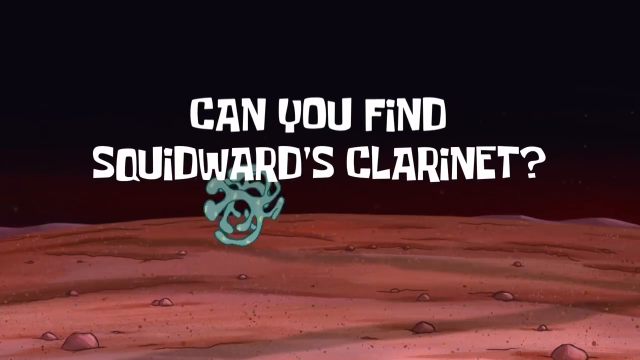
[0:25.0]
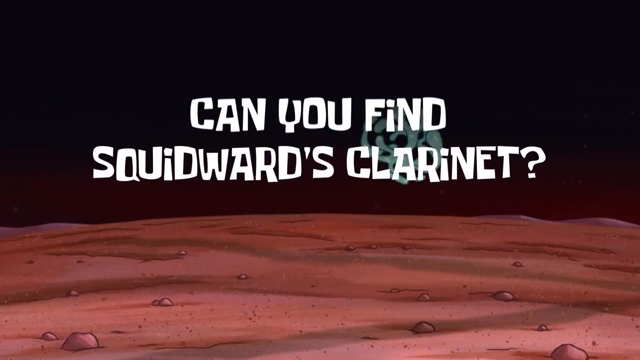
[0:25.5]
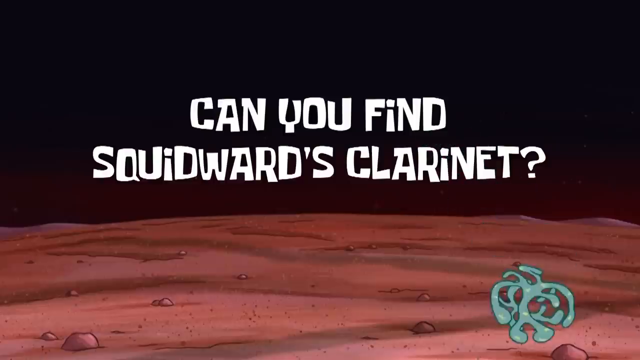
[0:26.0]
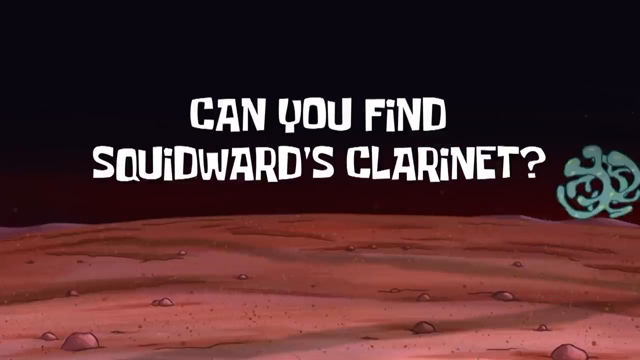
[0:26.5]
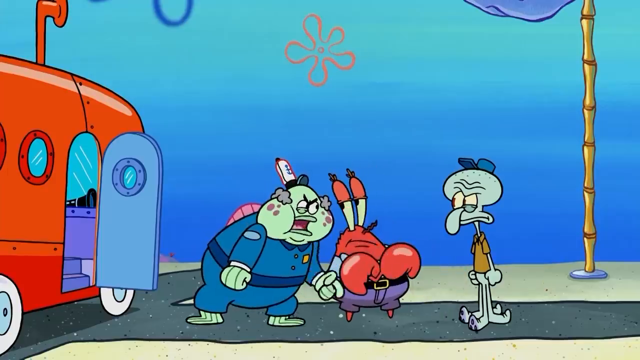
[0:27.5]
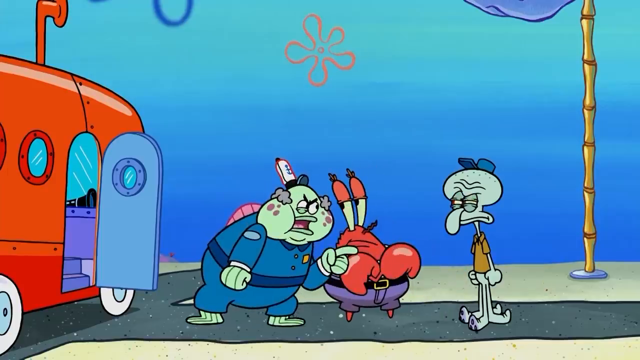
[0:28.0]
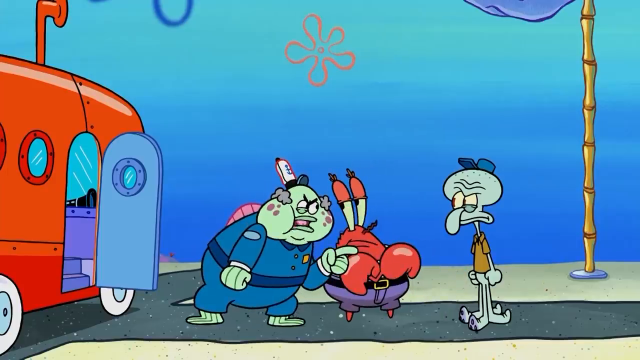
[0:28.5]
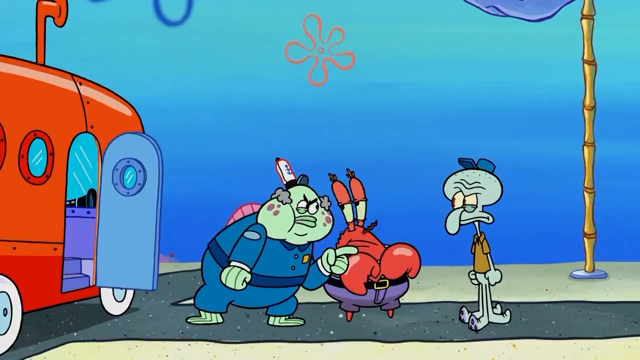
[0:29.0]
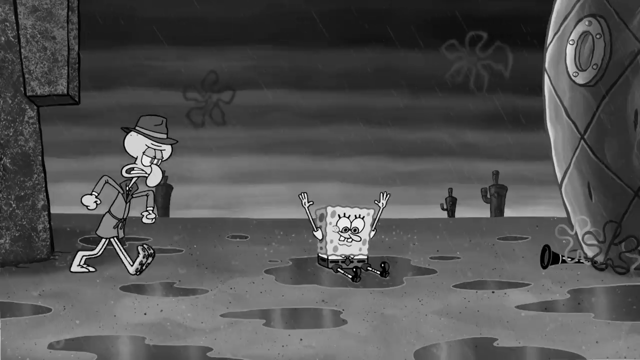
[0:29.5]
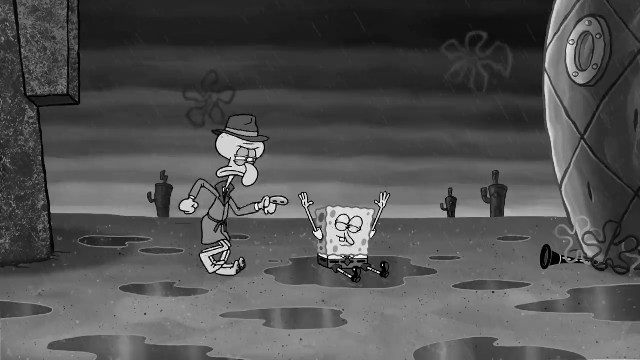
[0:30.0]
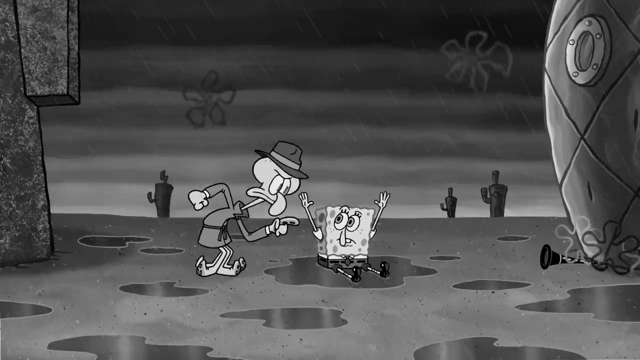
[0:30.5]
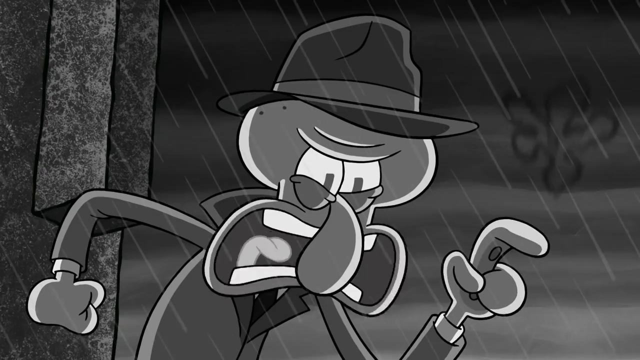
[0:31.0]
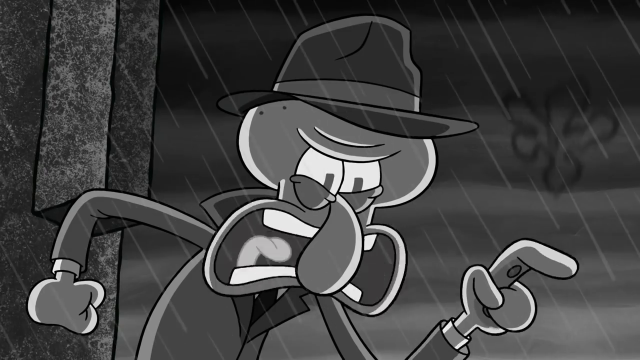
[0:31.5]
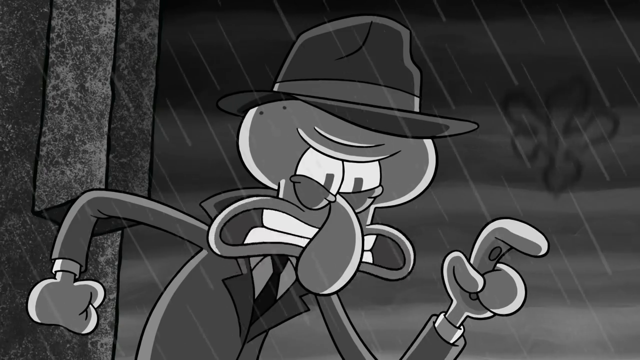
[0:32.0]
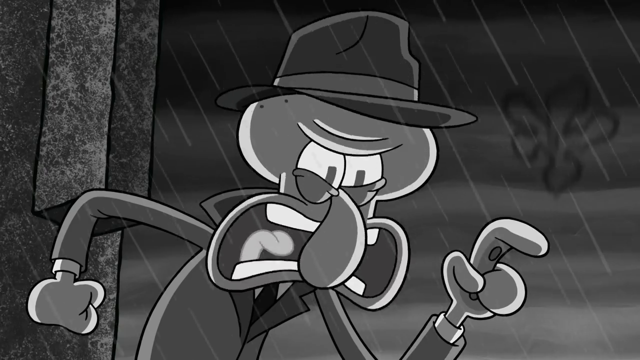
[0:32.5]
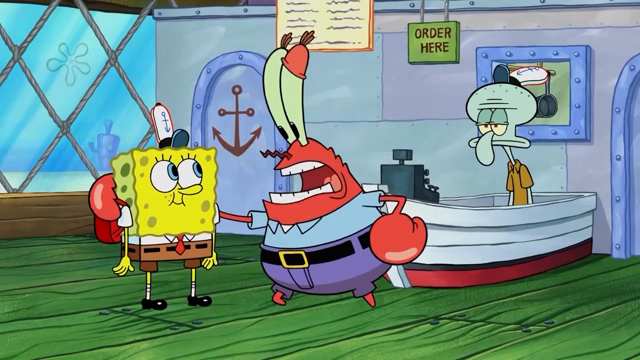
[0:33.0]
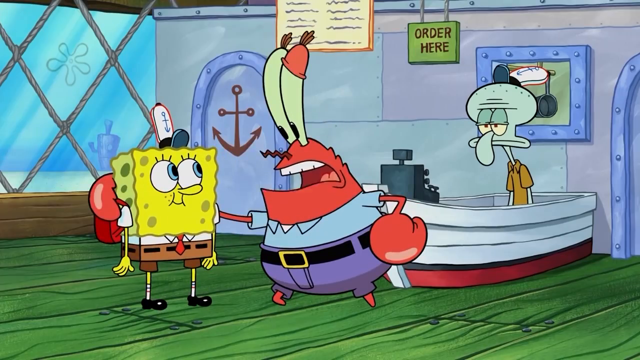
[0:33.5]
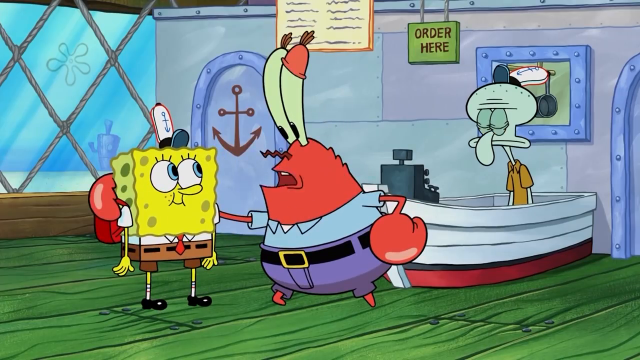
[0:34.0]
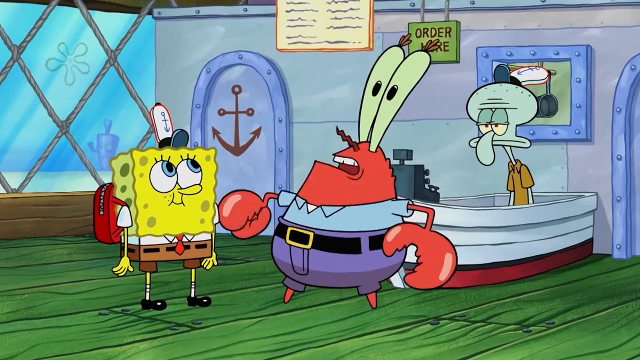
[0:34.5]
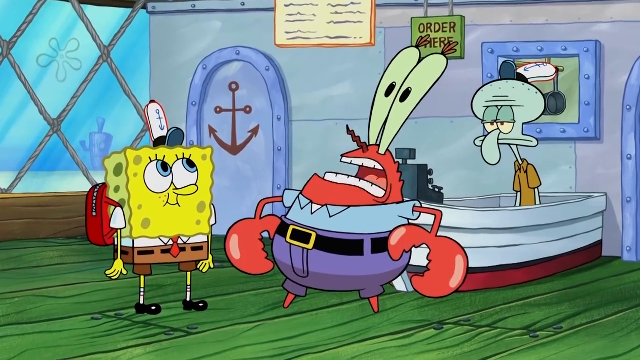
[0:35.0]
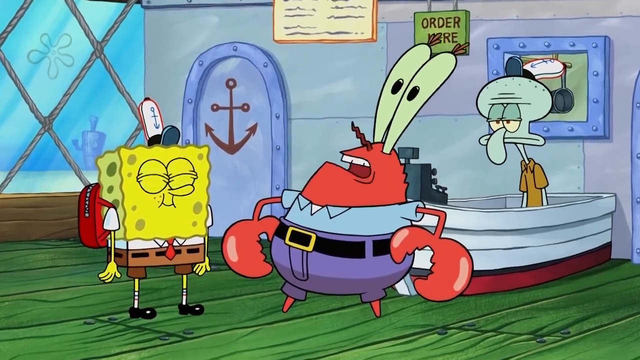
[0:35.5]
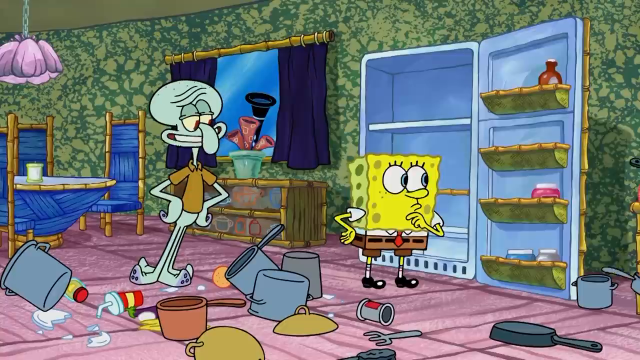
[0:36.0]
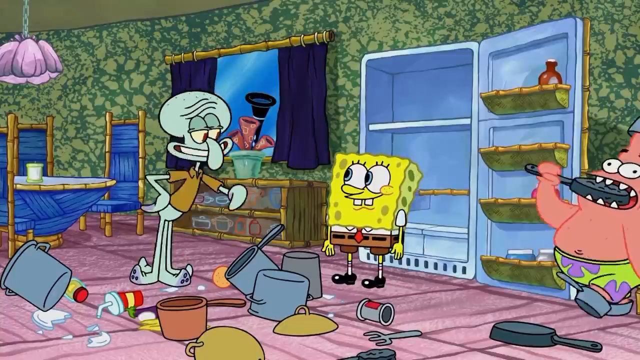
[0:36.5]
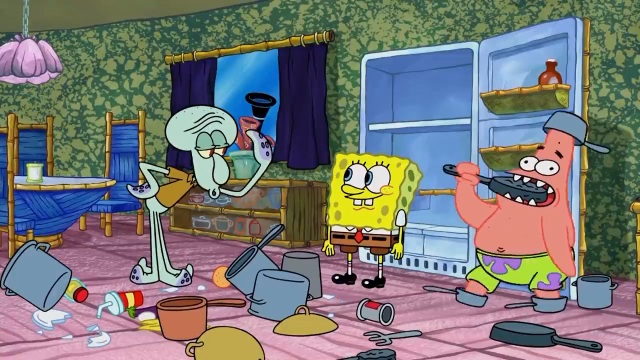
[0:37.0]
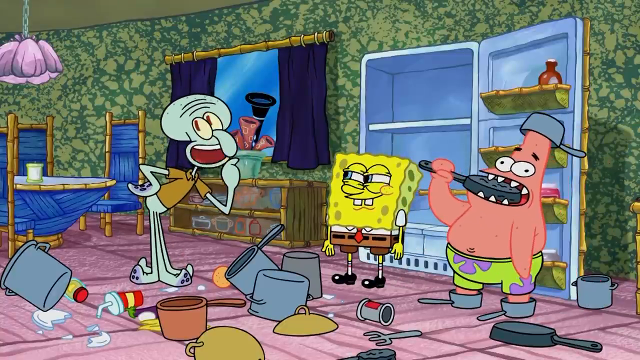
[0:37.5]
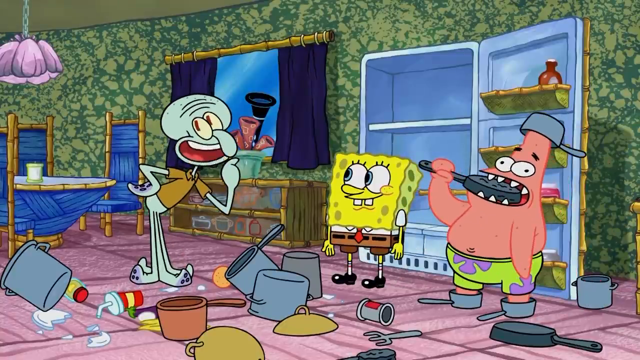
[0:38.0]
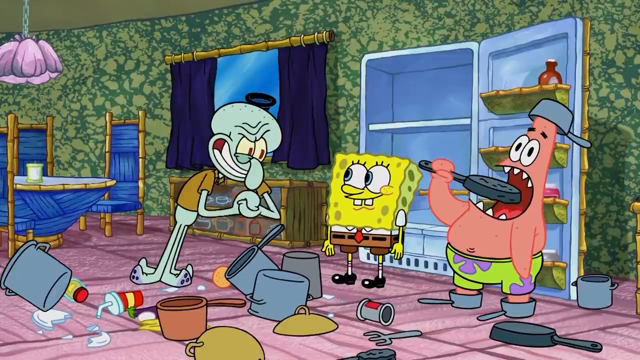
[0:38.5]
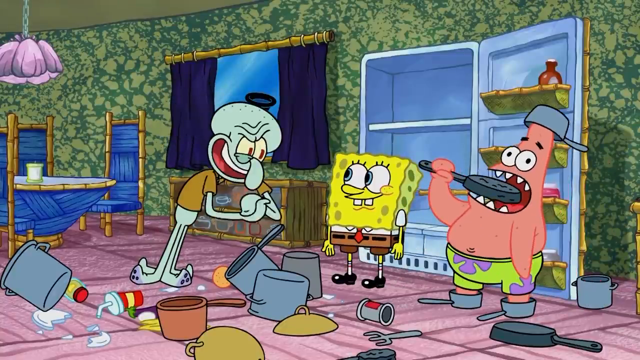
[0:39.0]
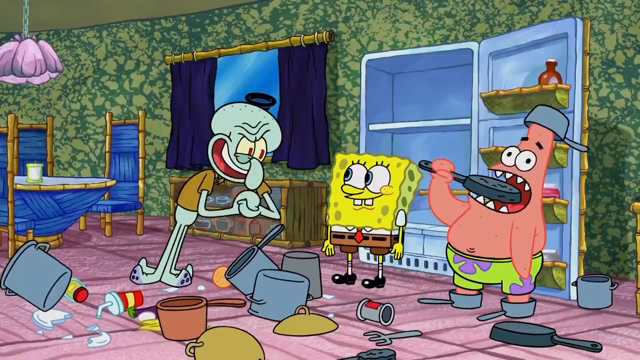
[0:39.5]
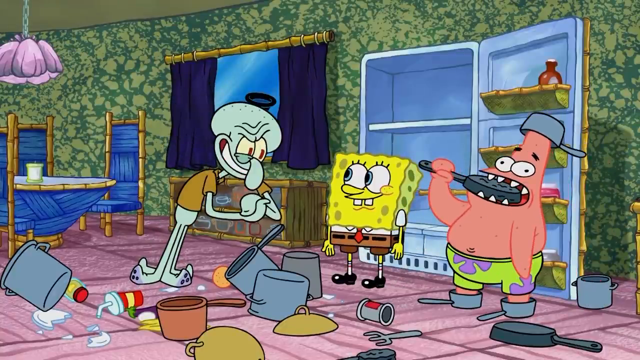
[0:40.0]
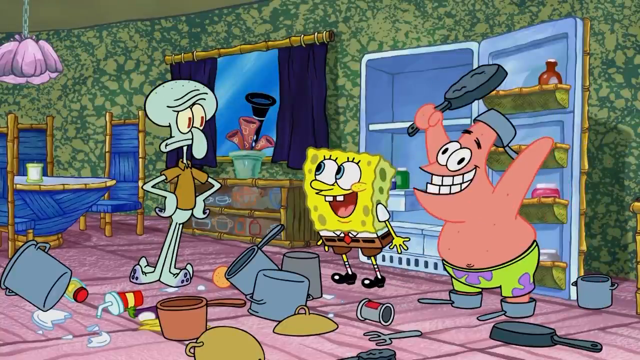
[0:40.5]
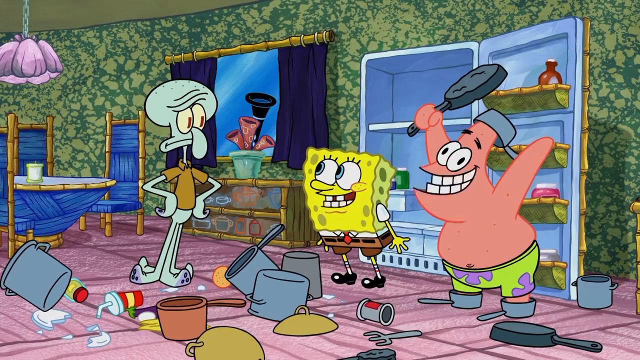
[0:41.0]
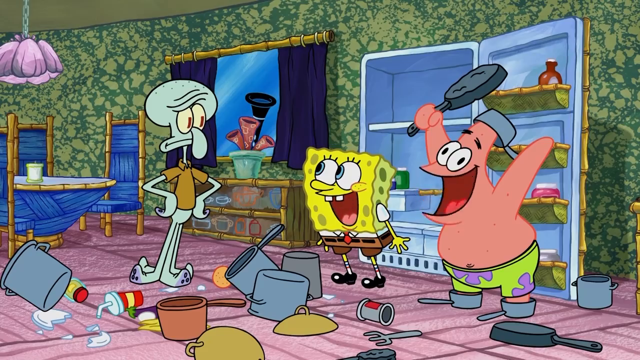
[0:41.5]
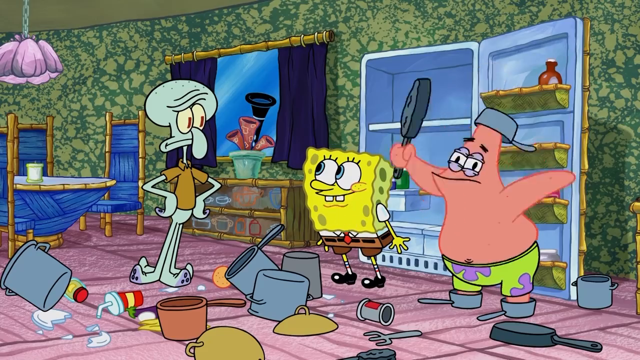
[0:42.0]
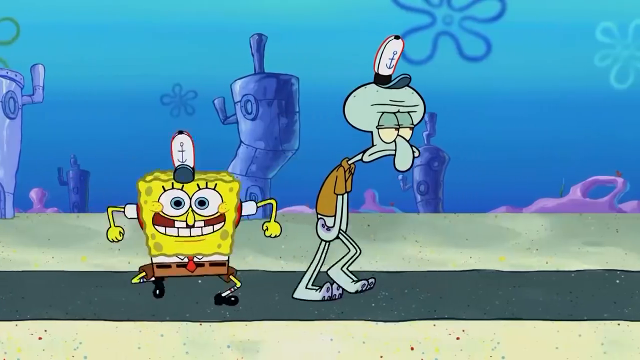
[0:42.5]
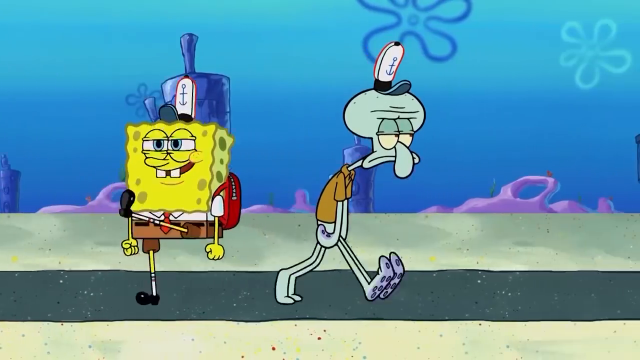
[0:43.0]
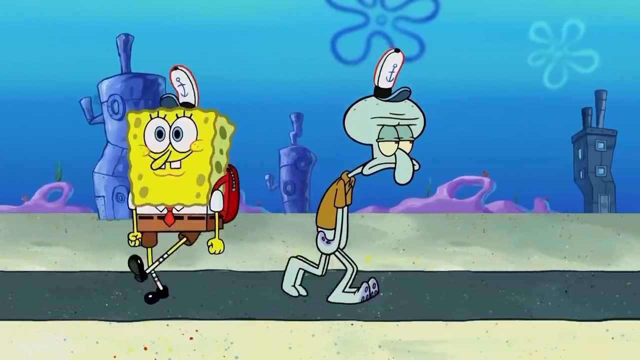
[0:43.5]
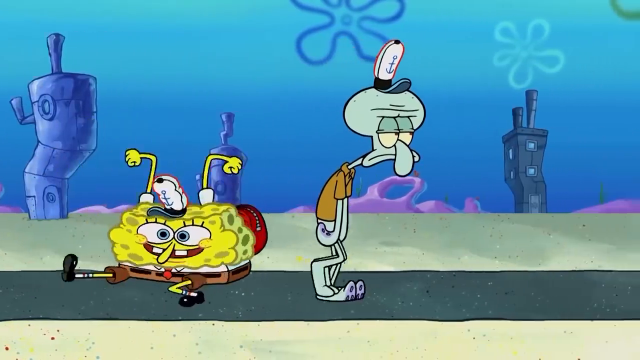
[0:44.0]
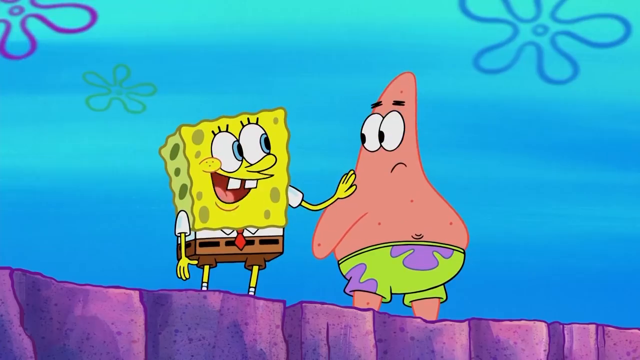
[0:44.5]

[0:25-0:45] A title or transition screen reads "can you find Squidward's clarinet?" in white font. The top two-thirds of the screen behind it is a dark black, dark brown color, and below is what looks like the surface of the ocean floor with a brownish-reddish hue. A green tumbleweed moves from left to right. It then cuts to some characters: Squidward, a crab, and an angry, kind of maintenance-looking man in front of an orange RV. Squidward stands very angrily with his fists balled up at his sides, while the man in the maintenance uniform points at him and talks to him. Next is a black-and-white video of Squidward in his suit and hat coming towards SpongeBob and pointing at him, then a close zoom on Squidward talking and pointing angrily. It quickly cuts to SpongeBob and the crab inside a building, with Squidward in a bathtub near them; the crab has his arm around SpongeBob and talks to him, and the view zooms in as he leans back and talks a little longer. Then comes a kitchen/dining room scene with Squidward, SpongeBob and Patrick. Squidward has one hand on his hip and points with the other as SpongeBob talks to him. Patrick is on the right with a pot on his head and a frying pan in his mouth. Squidward keeps talking and rubs his hands together as if scheming or going over a plan. Patrick raises his arms happily, and SpongeBob leans in, as if they are happy with what they heard from Squidward. It then cuts to Squidward walking with a kind of bored or irritated face, with SpongeBob behind him smiling broadly and jumping up and down.